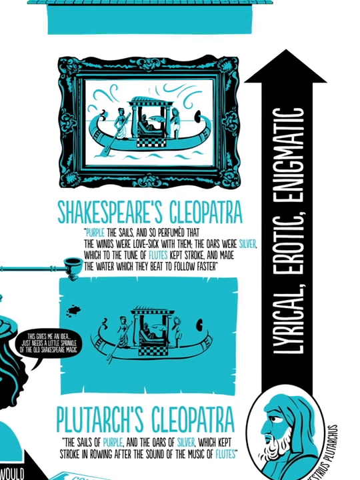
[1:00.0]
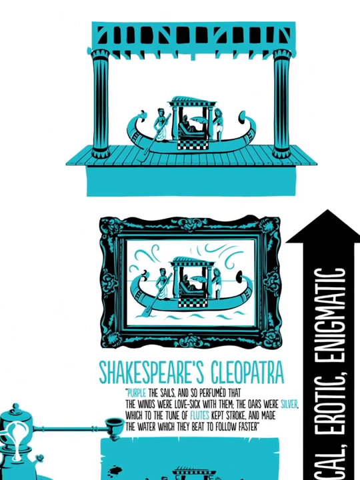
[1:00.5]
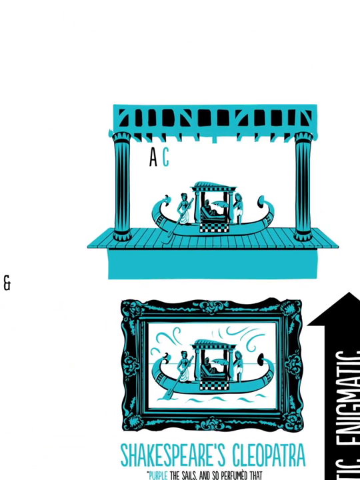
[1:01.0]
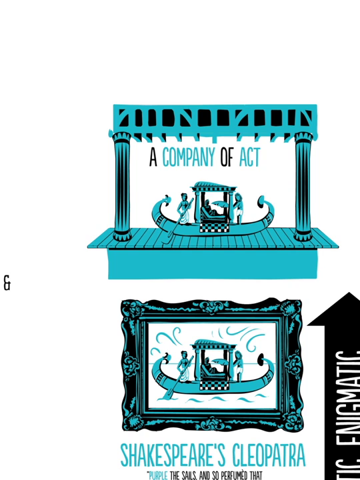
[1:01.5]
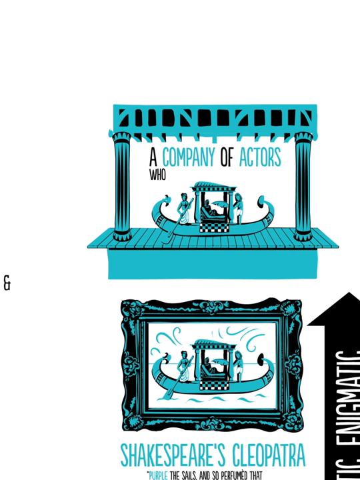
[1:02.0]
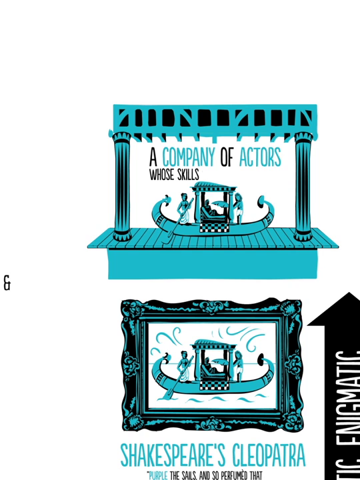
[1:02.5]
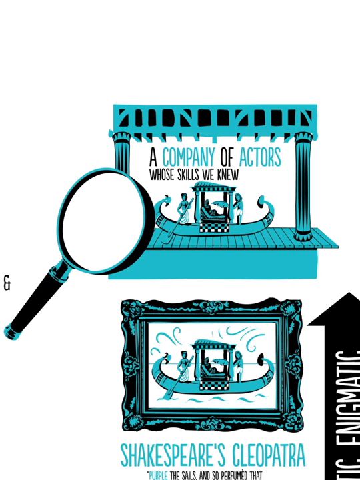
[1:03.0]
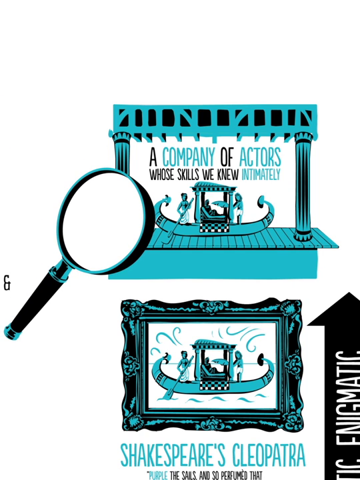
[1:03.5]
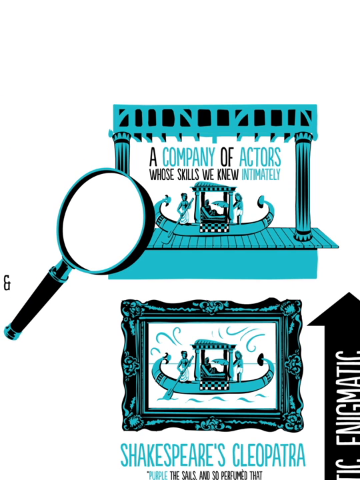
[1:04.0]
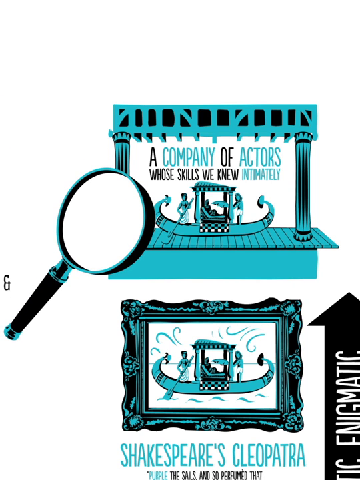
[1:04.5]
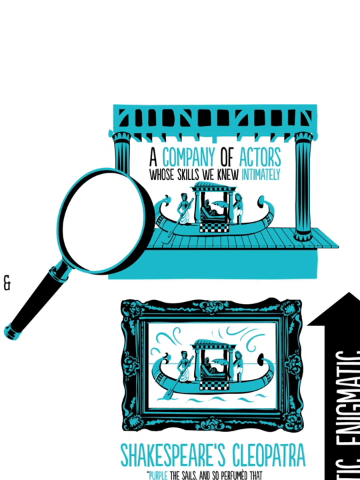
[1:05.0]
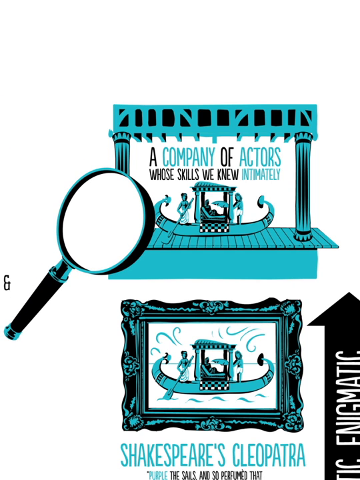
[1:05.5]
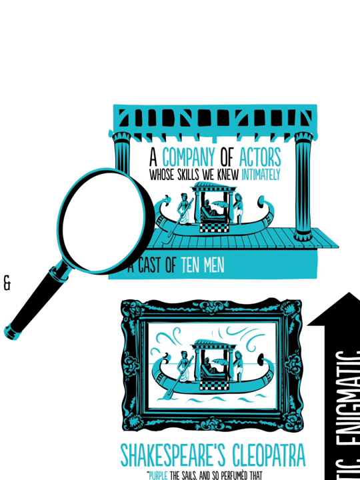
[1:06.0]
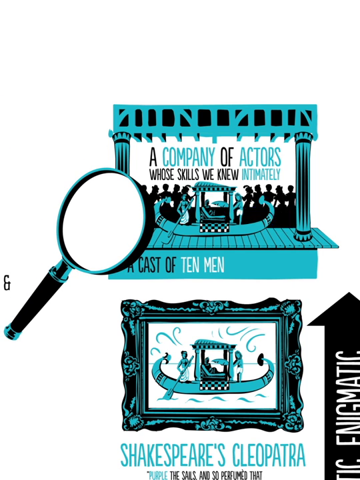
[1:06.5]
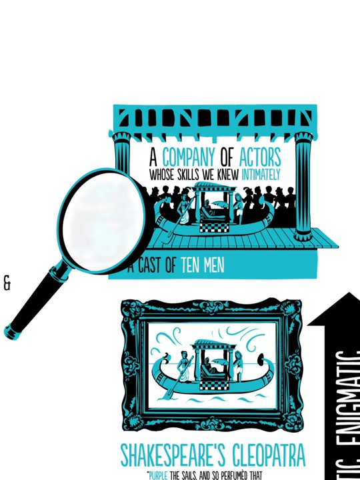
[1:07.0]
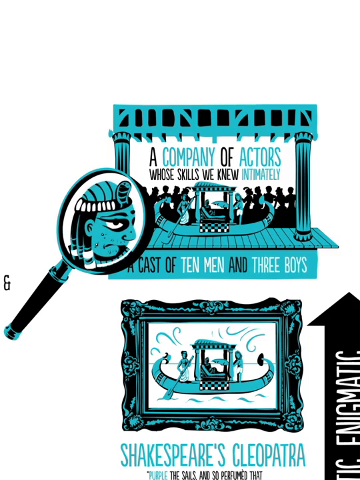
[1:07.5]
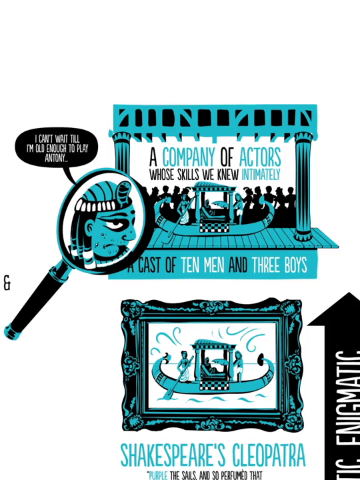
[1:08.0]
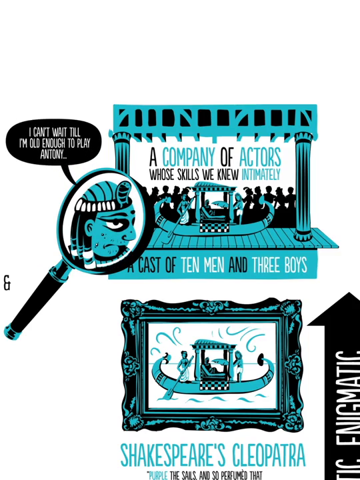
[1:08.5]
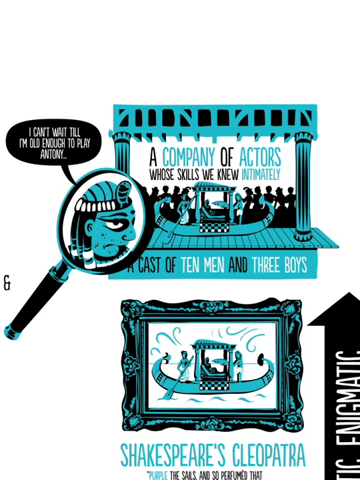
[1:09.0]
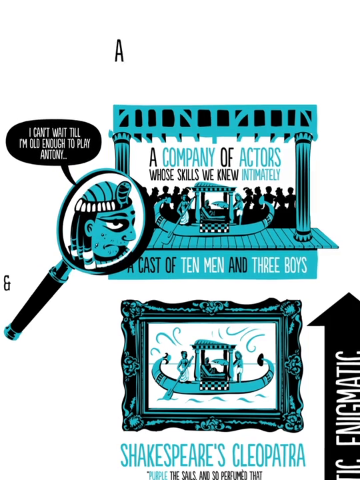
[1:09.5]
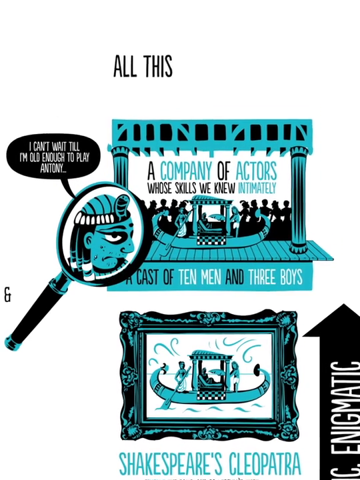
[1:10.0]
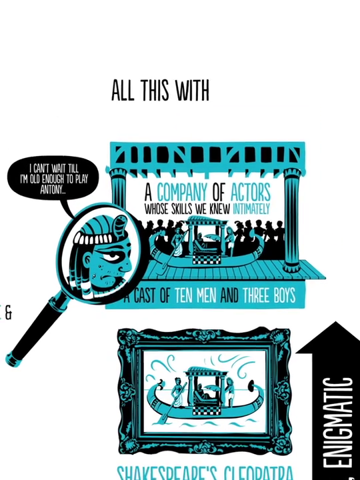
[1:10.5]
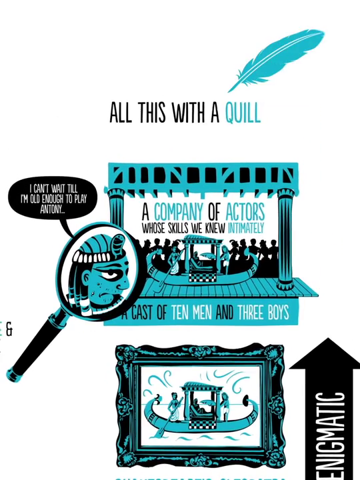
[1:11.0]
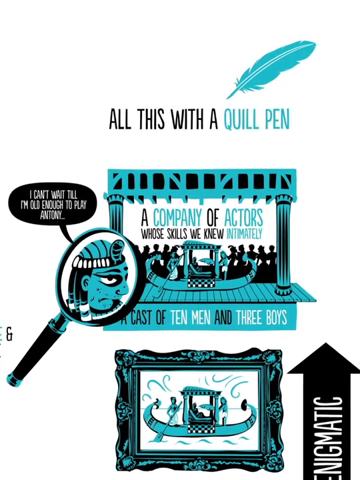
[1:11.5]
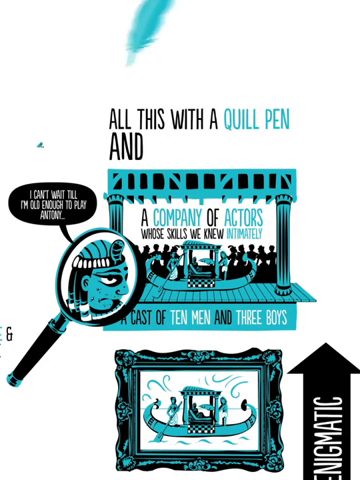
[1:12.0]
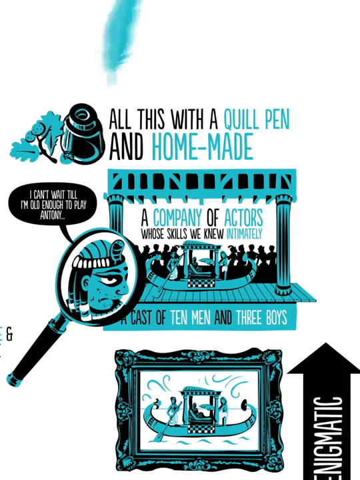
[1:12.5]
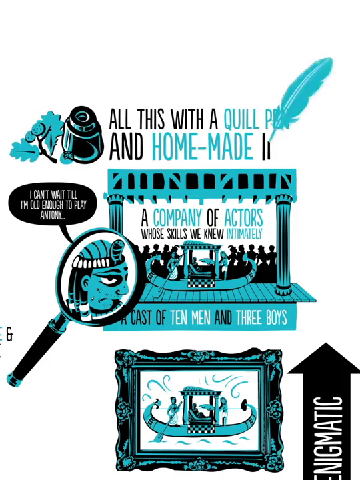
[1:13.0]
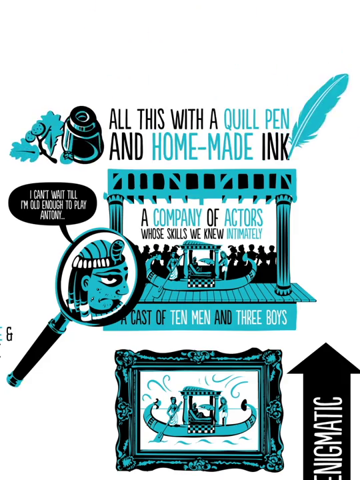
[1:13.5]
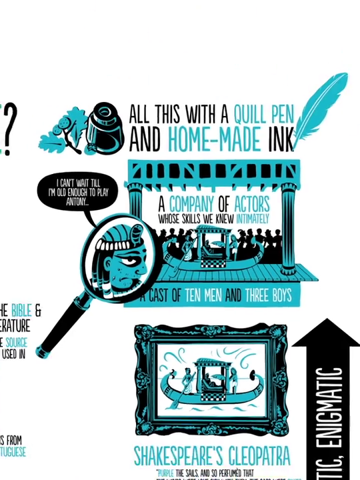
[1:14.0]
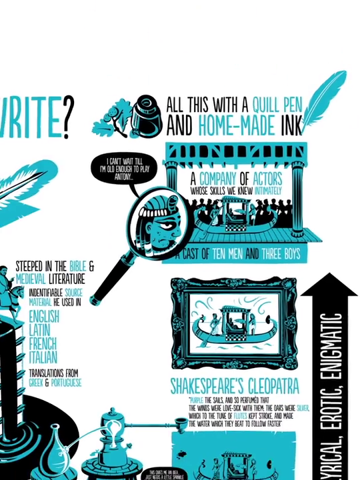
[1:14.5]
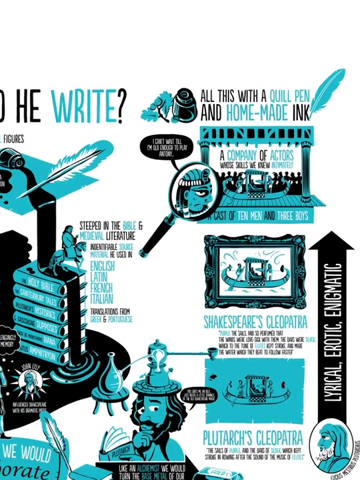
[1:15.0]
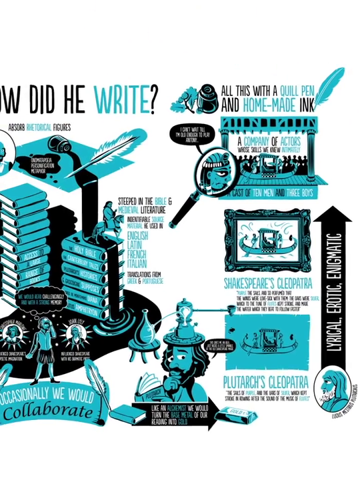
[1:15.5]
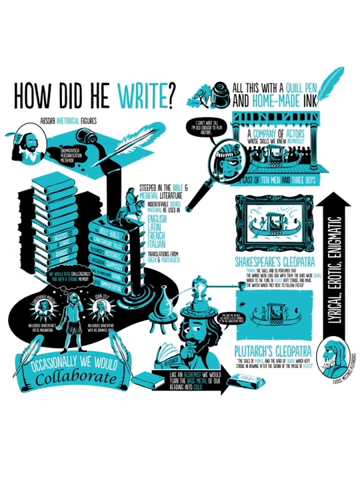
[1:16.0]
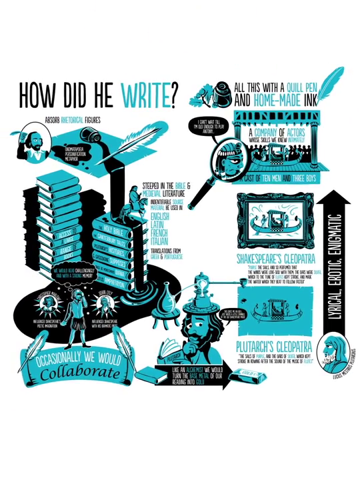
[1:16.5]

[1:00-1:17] On a solid white background, cartoon-style images use only a single shade of blue along with black and white. In the center is what appears to be a stage, with a column on both the left and right sides holding up a ceiling above. On the stage is a boat with two workmen: one on the left-hand side with an oar, and one on the right-hand side with what appears to be a feather, fanning a man who is sitting inside a canopy. A magnifying glass slides in from the left-hand side to the left-hand side of the stage. Writing then appears all at once behind the stage, followed by many silhouettes that appear to be an audience behind the stage and boat. Above the stage, writing appears in two rows, one letter at a time. After the writing is finished, a single solid blue quill pen is shown finishing the punctuation.